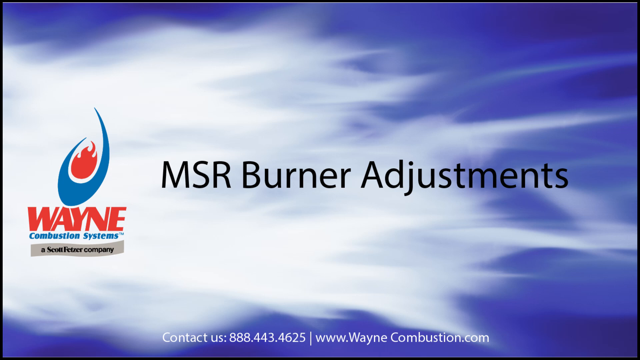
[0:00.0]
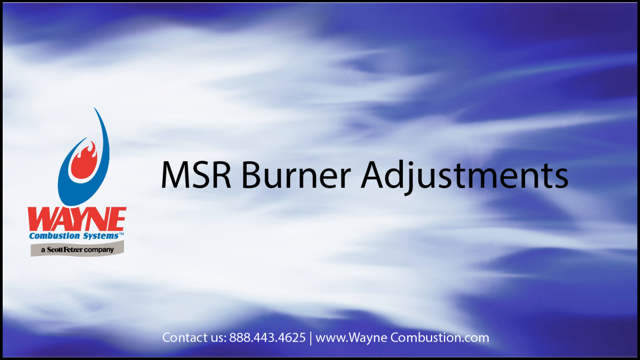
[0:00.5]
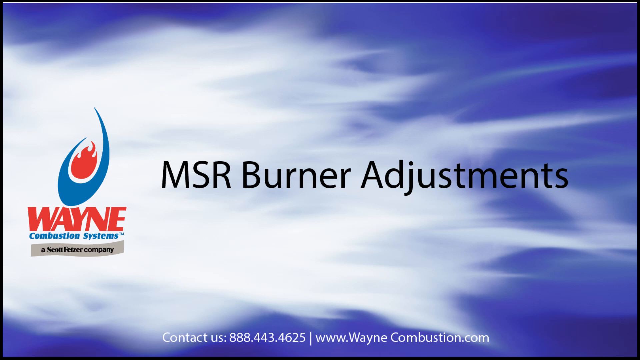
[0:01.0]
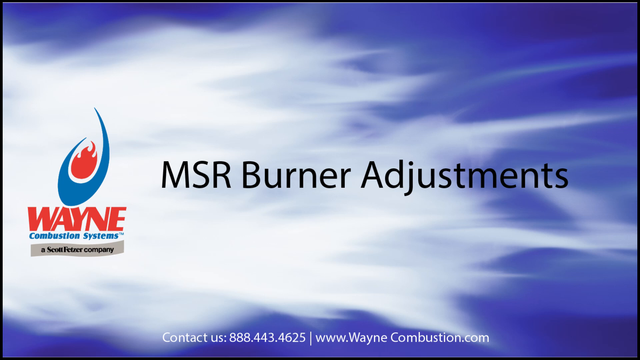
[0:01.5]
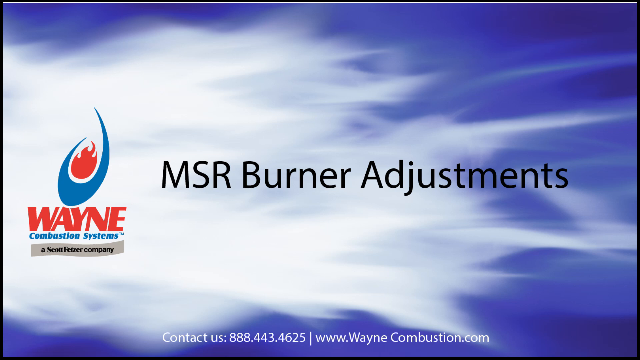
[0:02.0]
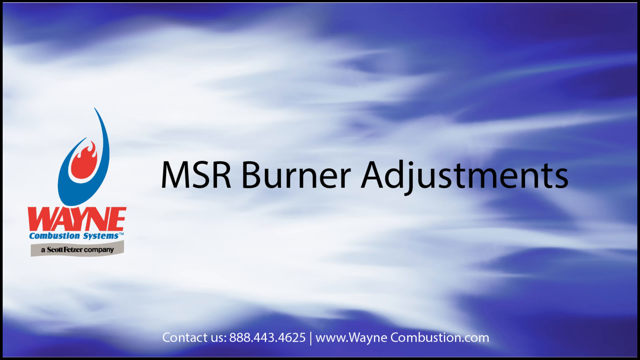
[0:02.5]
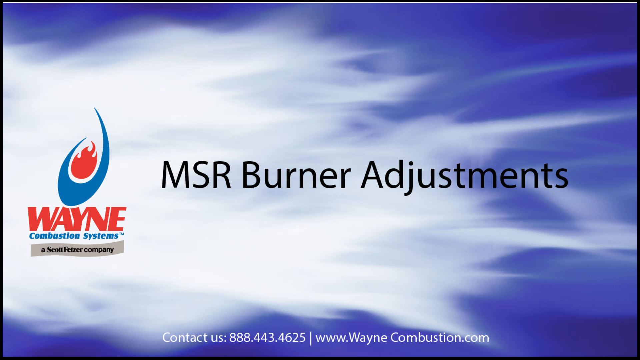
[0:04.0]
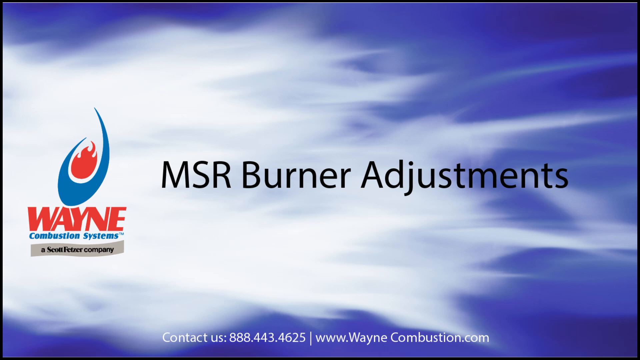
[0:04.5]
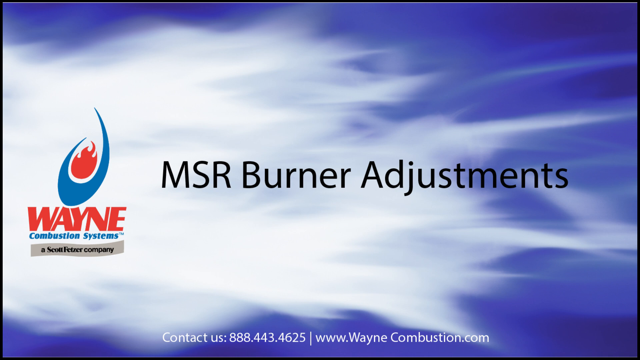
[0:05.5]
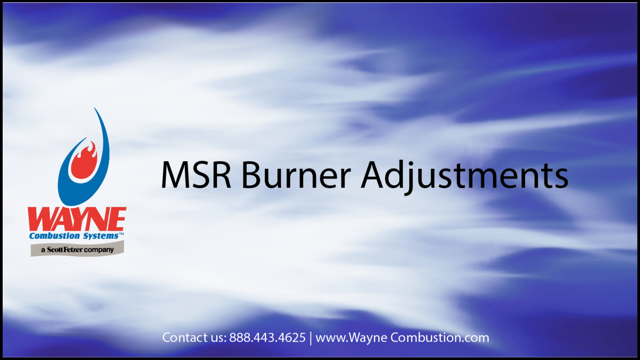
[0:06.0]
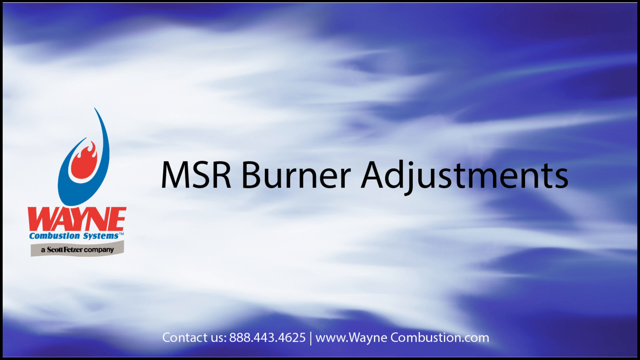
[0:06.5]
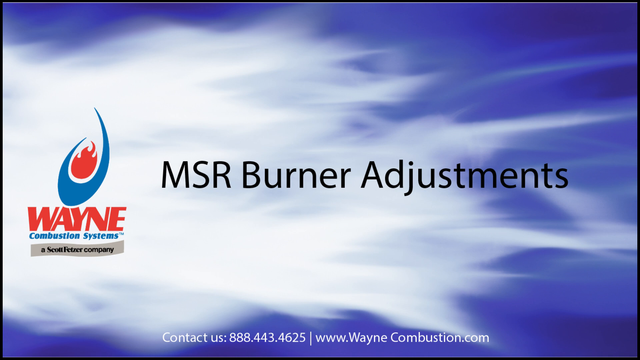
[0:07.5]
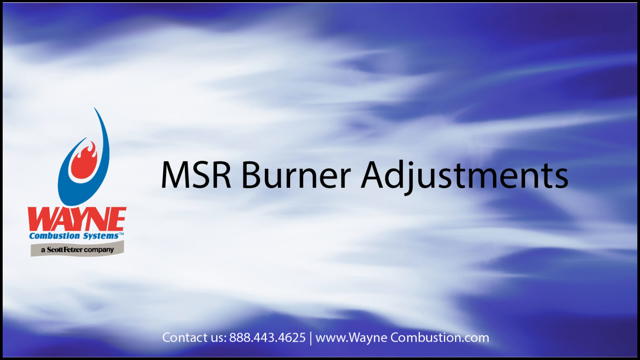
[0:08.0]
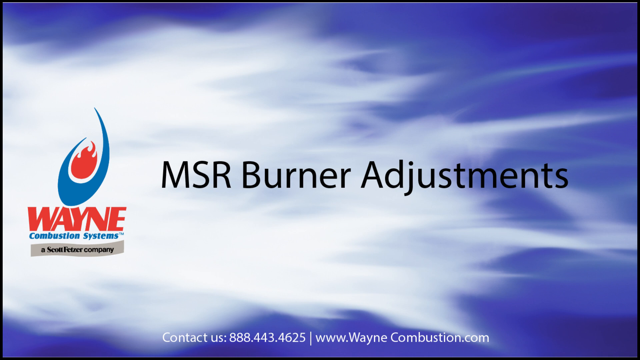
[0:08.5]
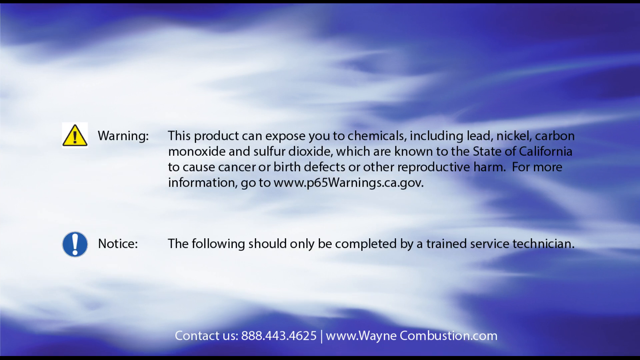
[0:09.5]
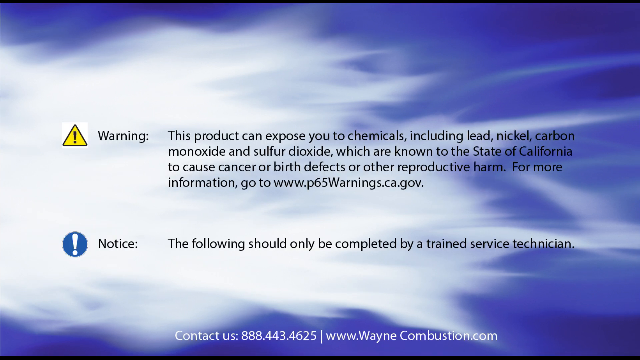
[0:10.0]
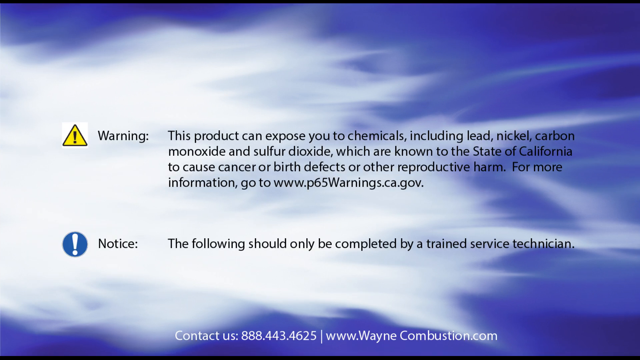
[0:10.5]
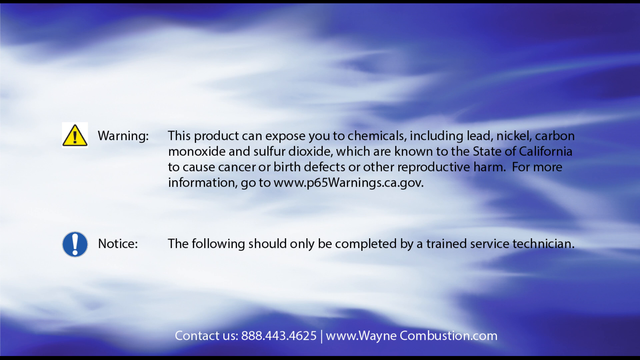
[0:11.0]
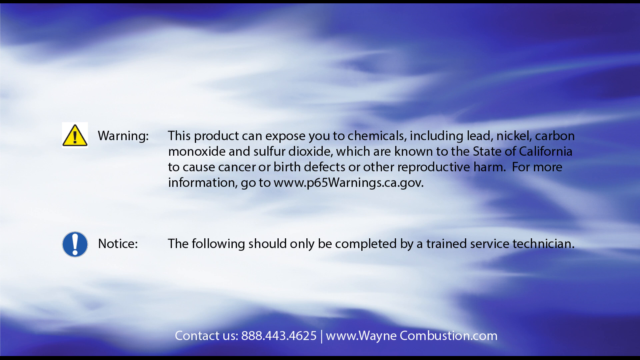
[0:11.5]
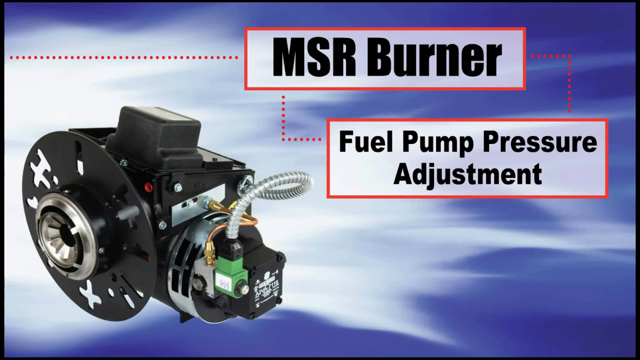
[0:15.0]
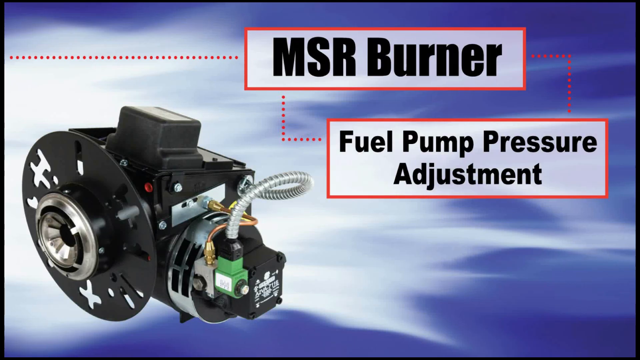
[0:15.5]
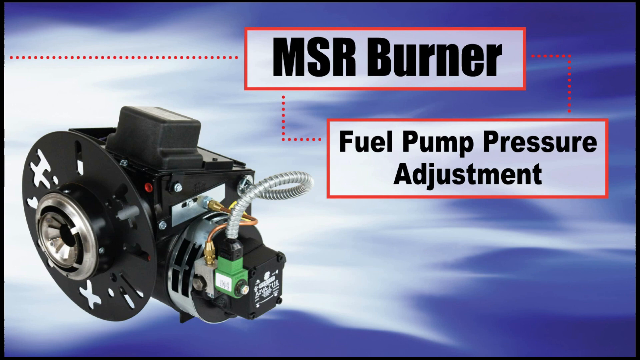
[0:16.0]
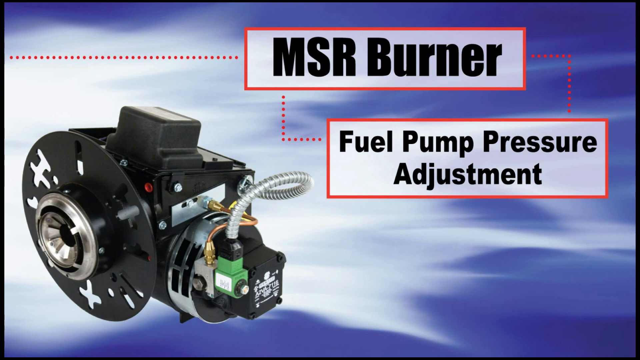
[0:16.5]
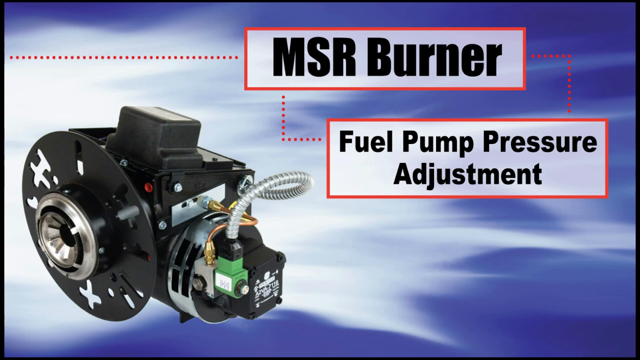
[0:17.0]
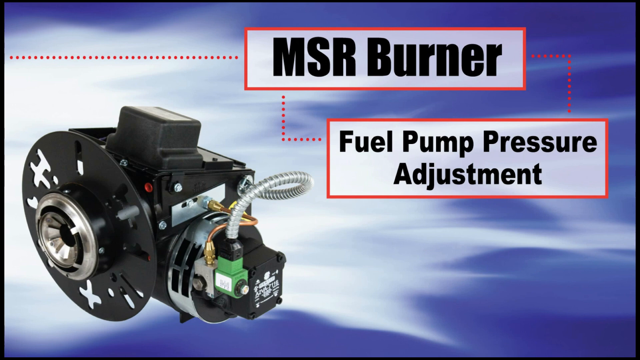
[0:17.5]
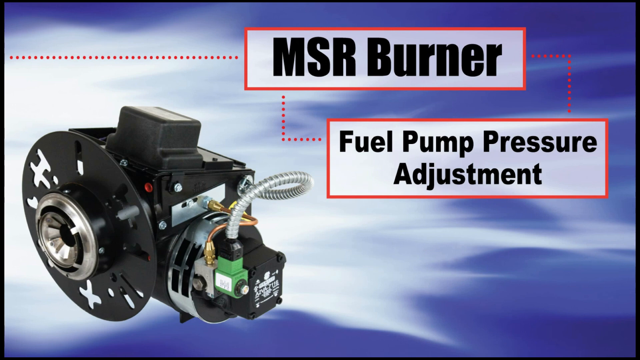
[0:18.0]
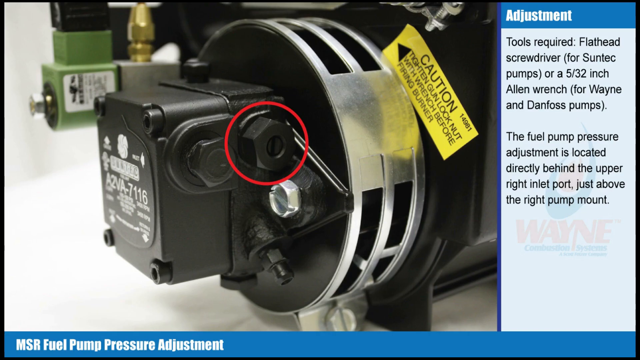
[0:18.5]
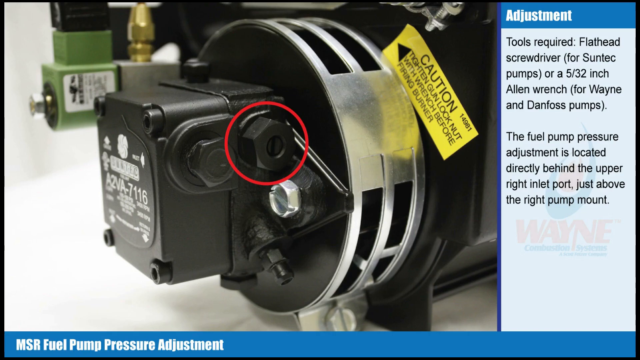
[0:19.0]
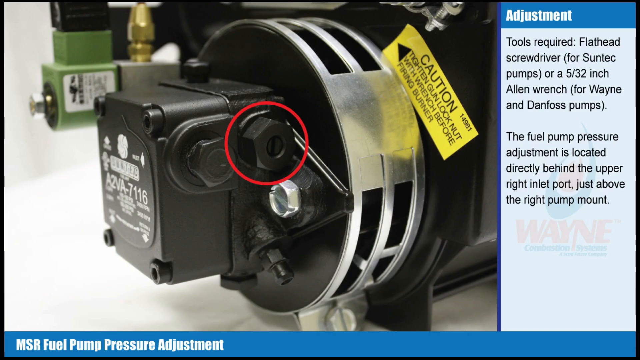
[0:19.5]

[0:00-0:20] The video opens on a page with a blue background and a white flame going across from the left to the right side. In the middle of the screen, black text reads "MSR burner adjustments." On the left side is a graphic for a company named Wayne Combustion Systems, with "Wayne" in red text and "Combustion Systems" in blue text. This stays on screen for nine seconds. Then a warning pops up, with a yellow exclamation point sign to its left. The text reads "the product can expose you to chemicals including lead, nickel, carbon monoxide, and sulfur dioxide, which are known to the state of California to cause cancer or birth defects or other reproductive harm. For more information, go to www.p65warnings.ca.gov." The scene then transitions to a graphic showing a fuel pump. Big black text with a red outline in the top right center of the screen reads "MSR Burner." Below it, a red text box with black text reads "Fuel Pump Pressure Adjustment."